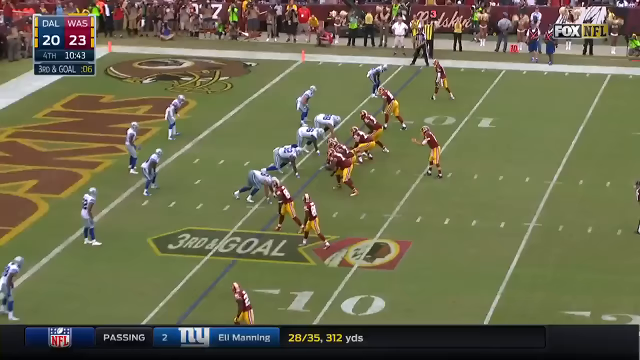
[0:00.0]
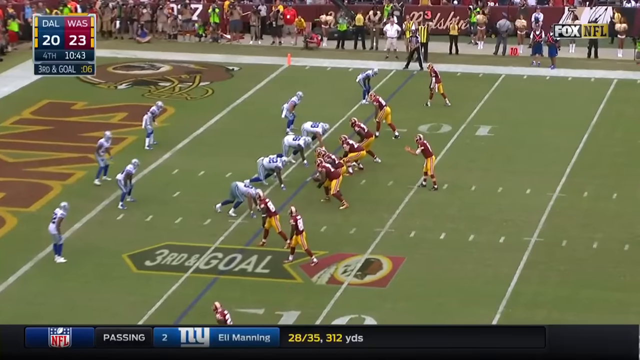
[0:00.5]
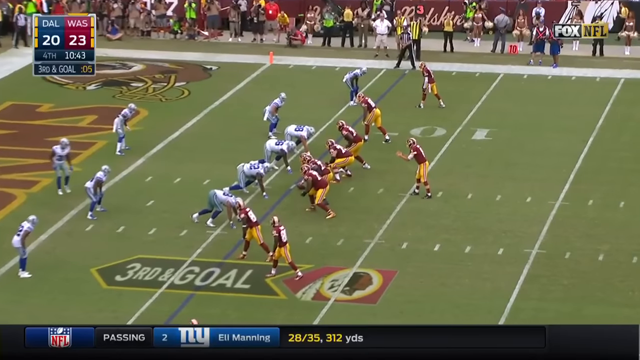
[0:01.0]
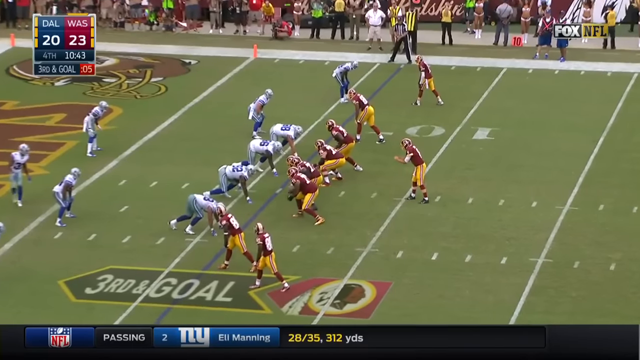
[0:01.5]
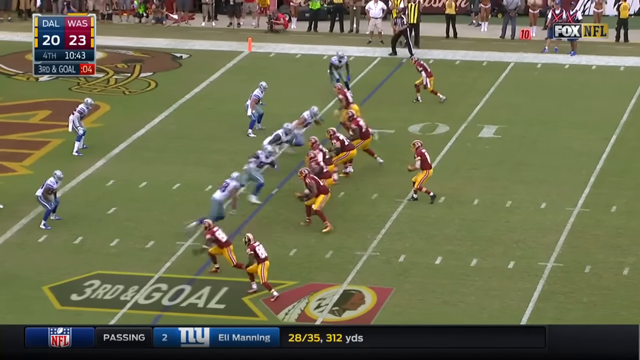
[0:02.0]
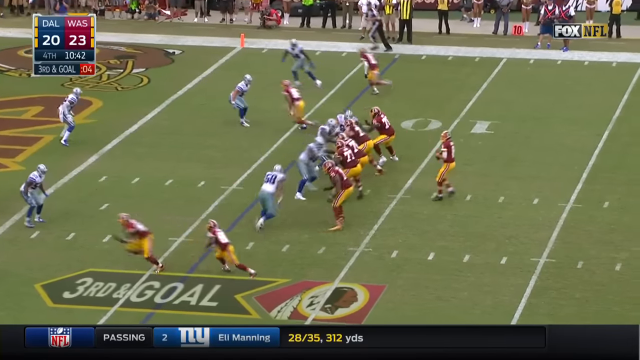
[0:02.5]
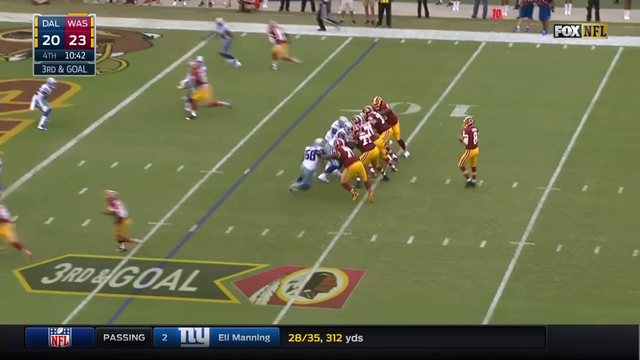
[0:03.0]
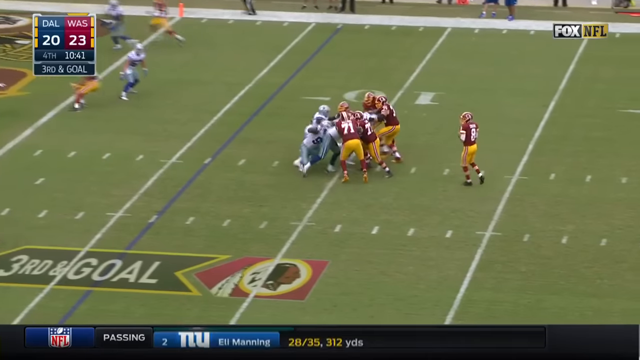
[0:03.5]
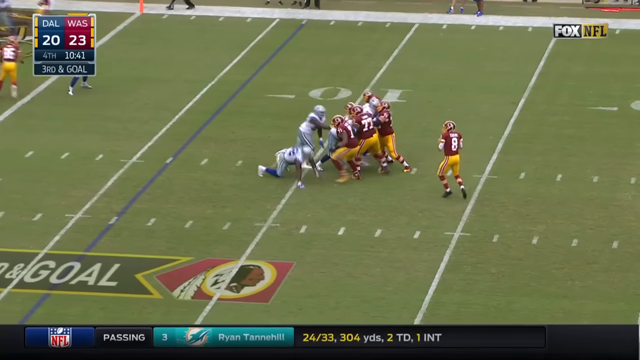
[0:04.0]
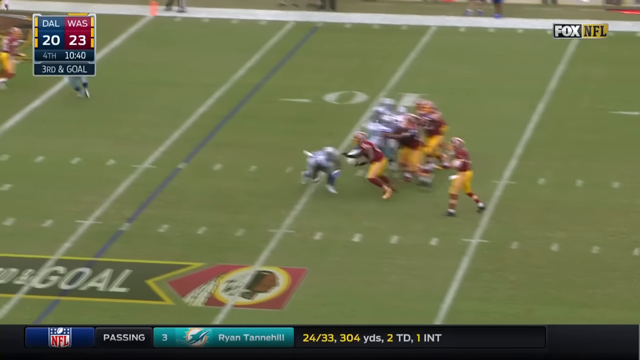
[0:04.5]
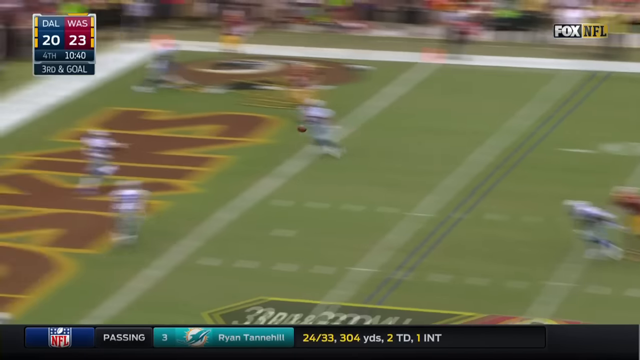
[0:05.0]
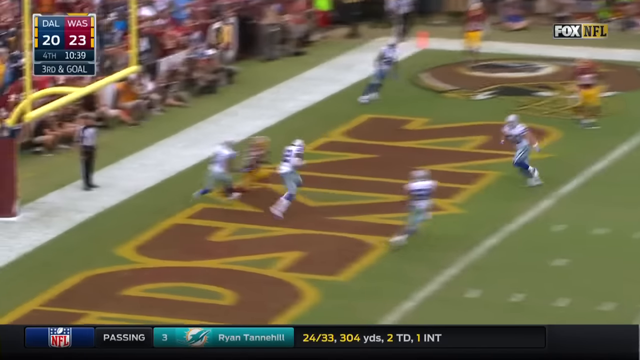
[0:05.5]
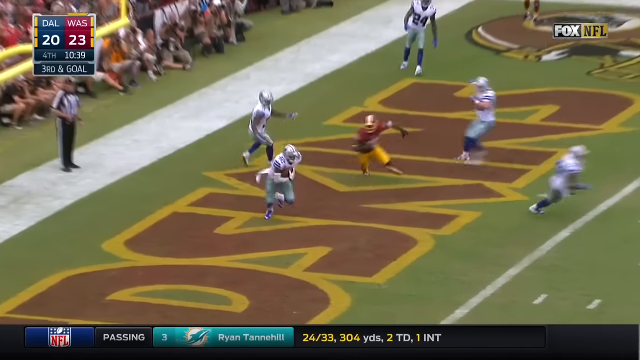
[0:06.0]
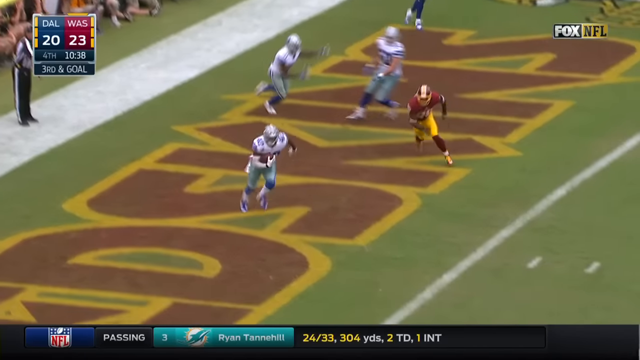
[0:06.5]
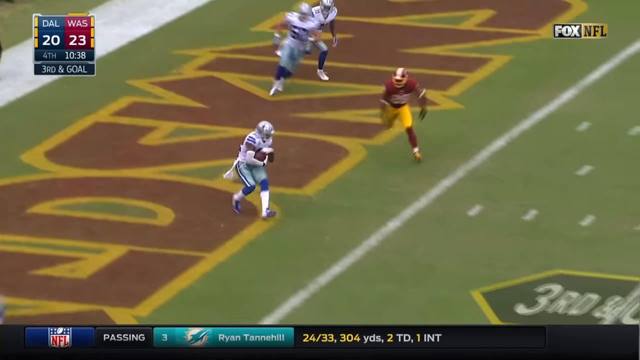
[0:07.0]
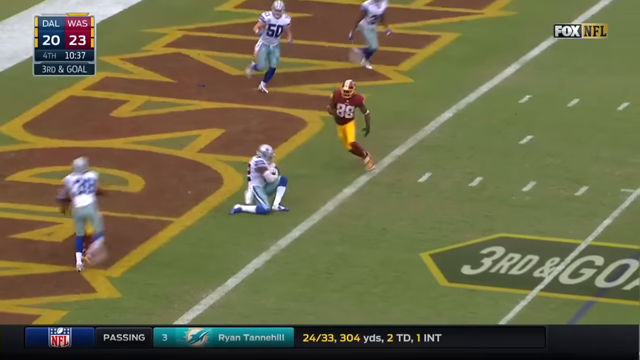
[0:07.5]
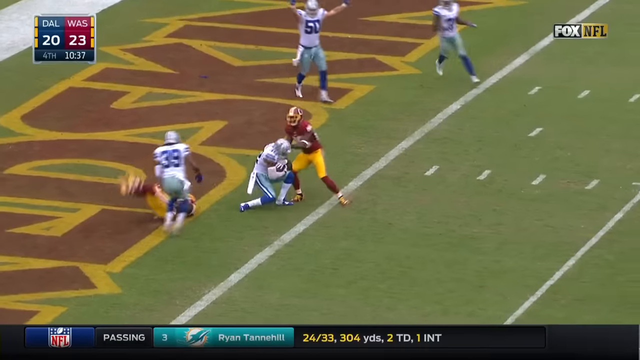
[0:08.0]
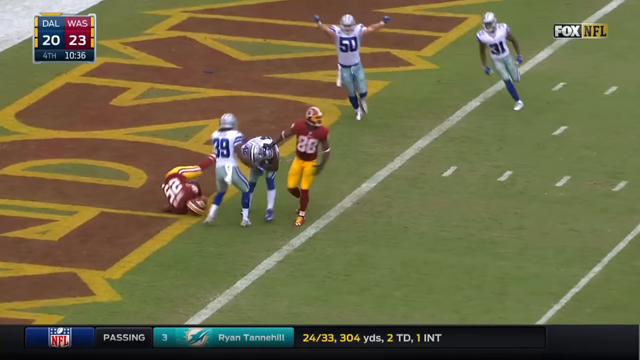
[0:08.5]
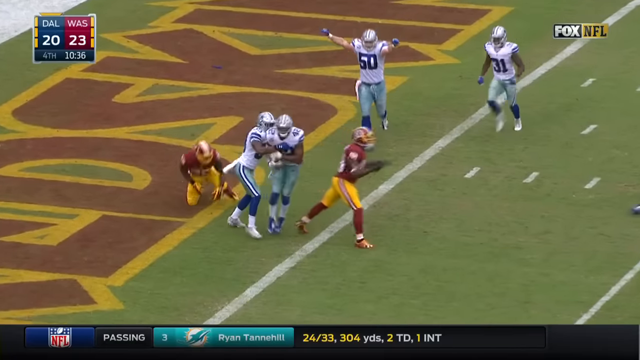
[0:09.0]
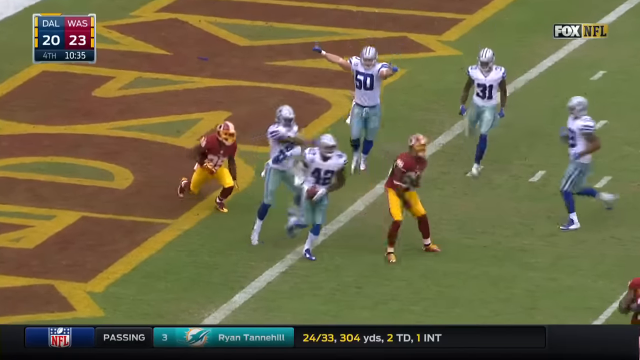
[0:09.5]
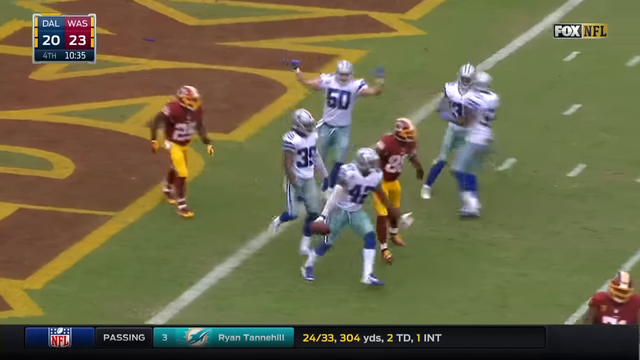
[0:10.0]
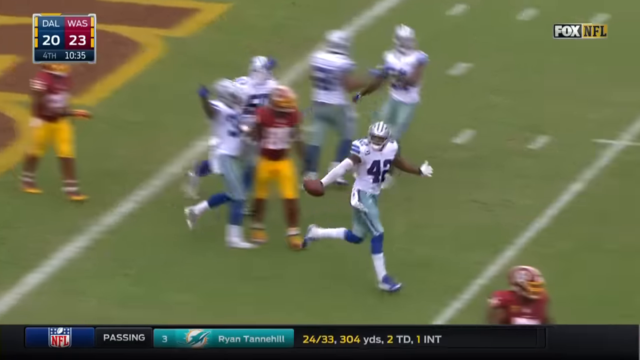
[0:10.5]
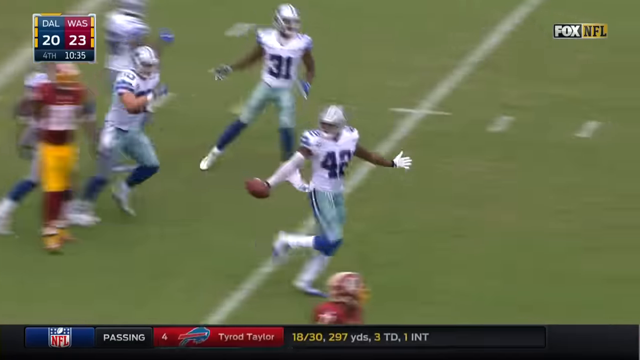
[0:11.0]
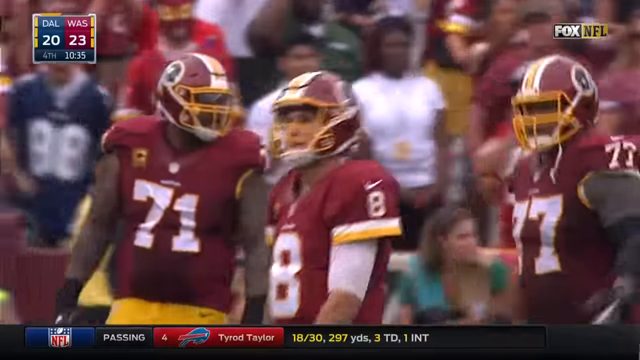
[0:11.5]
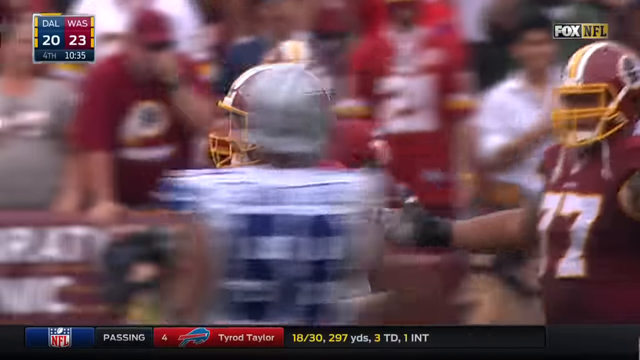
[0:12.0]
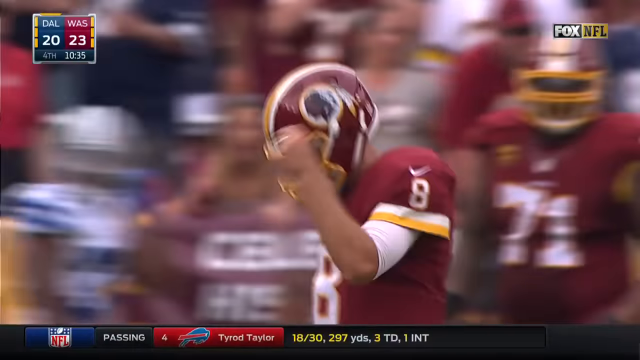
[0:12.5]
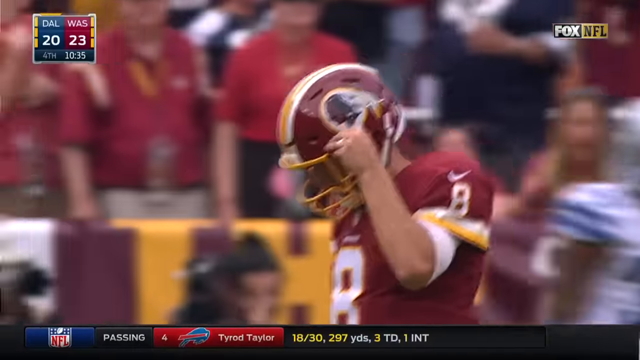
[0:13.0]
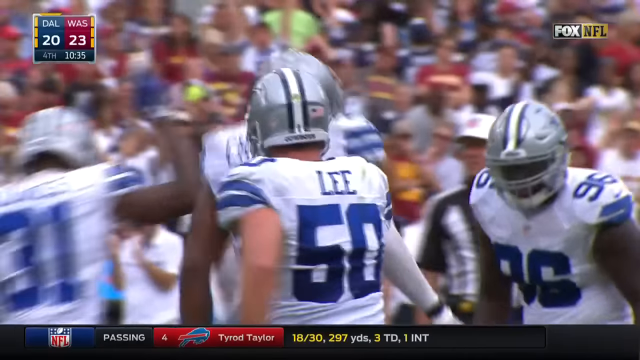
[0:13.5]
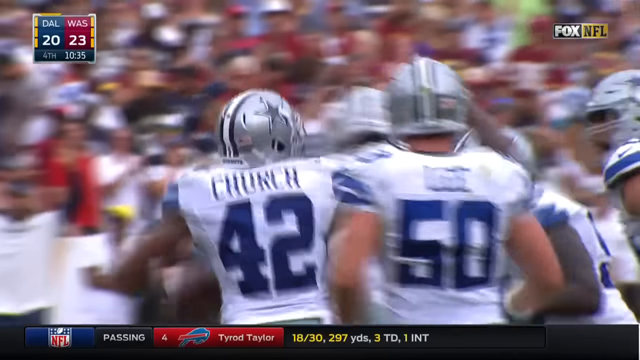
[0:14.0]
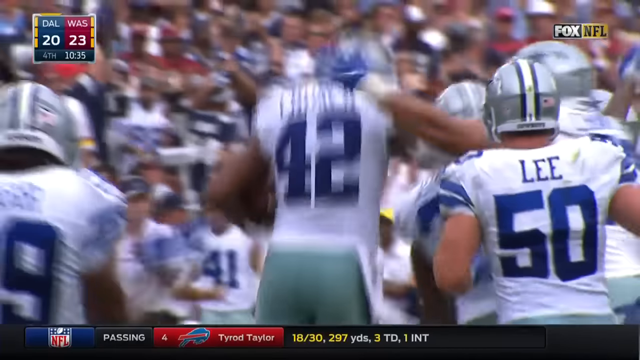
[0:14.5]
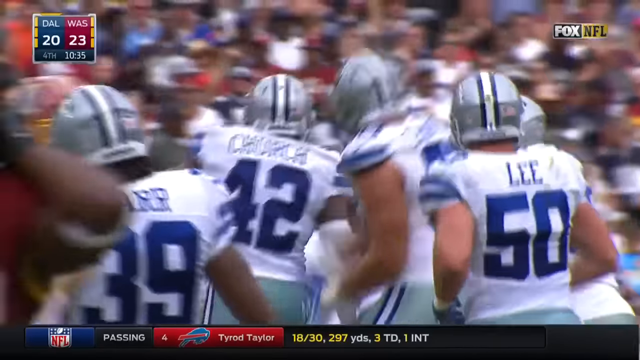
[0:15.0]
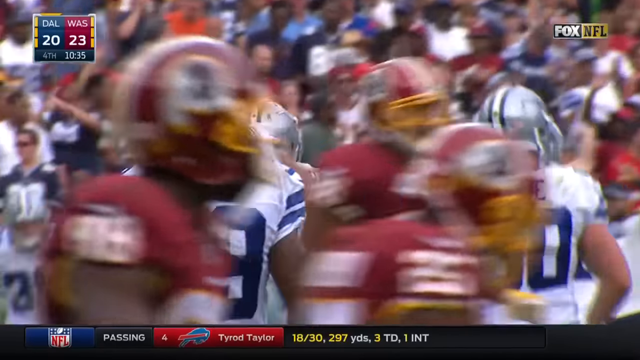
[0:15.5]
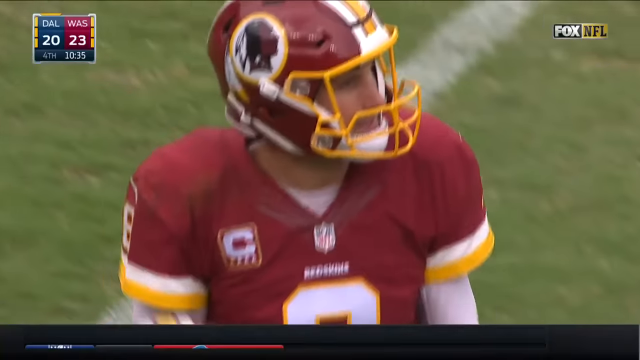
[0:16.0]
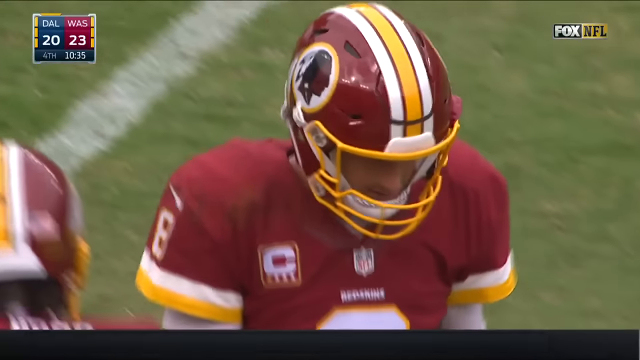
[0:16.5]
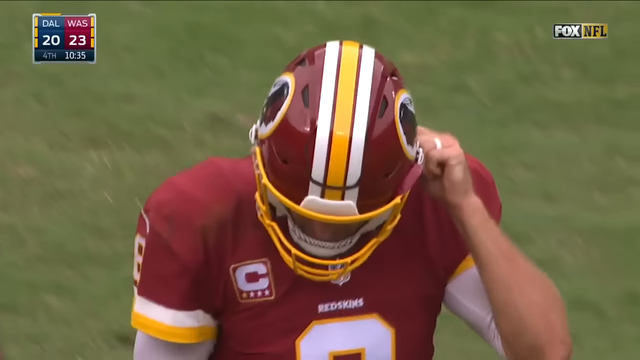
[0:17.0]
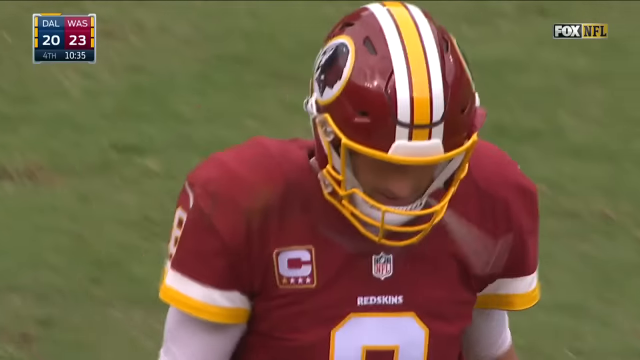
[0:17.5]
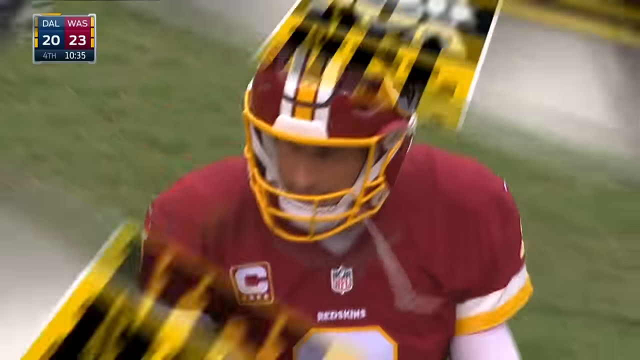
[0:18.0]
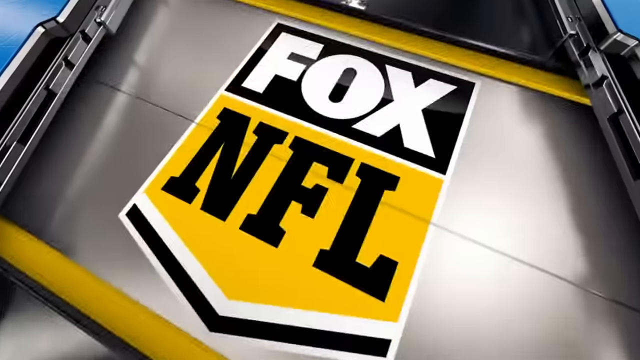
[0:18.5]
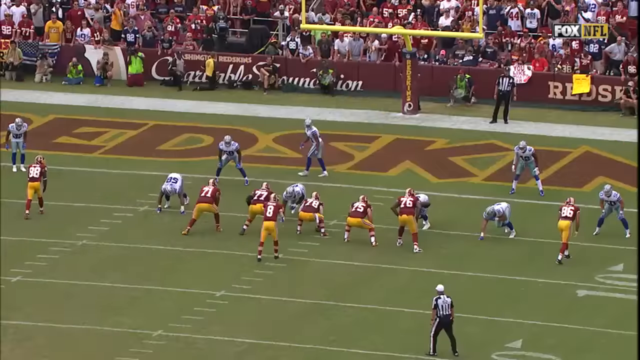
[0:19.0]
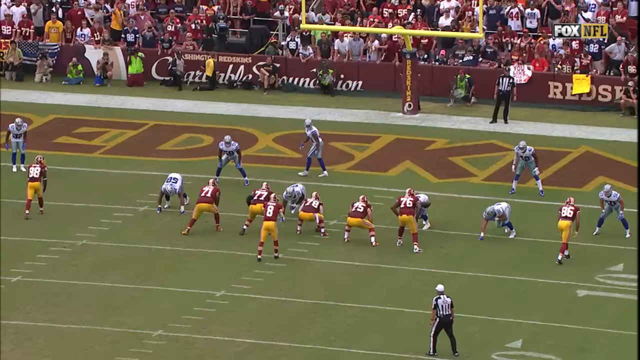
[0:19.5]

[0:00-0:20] This is a televised broadcast of what looks like a Dallas versus Washington NFL game. A small box in the upper left corner shows who is playing: "DAL" for Dallas on a blue background and "WAS" for Washington in red. In white lettering, the number under Dallas is 20 and under Washington it is 23. Another line in white lettering reads "4th and 10:43", apparently the countdown clock. Below that, six seconds are shown on the clock. The Washington Redskins have the ball, and the play takes place on the six-yard line. The ball is snapped, and the quarterback drops back to about the 15-yard line, where he throws the ball into the end zone. It is intercepted by the opposing team. The receiver who was apparently supposed to catch the ball comes directly at the player who intercepted it. The interceptor kneels down with his right knee on the ground and his left foot on the ground, his knee bent, and the ball cradled next to his chin.